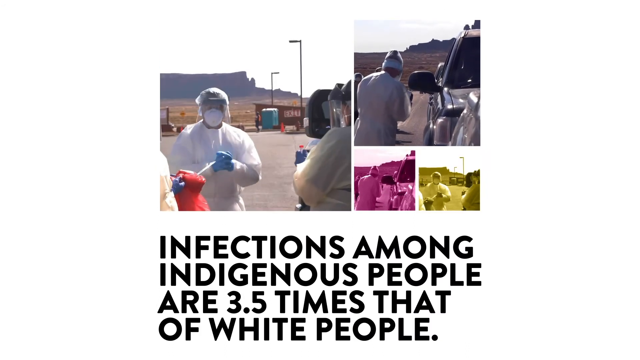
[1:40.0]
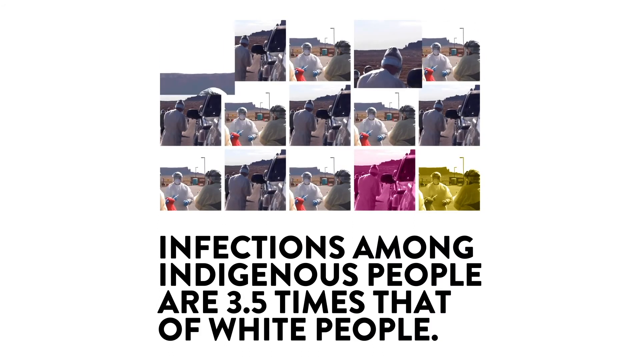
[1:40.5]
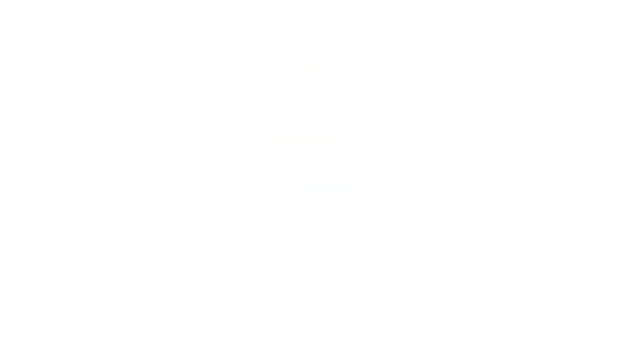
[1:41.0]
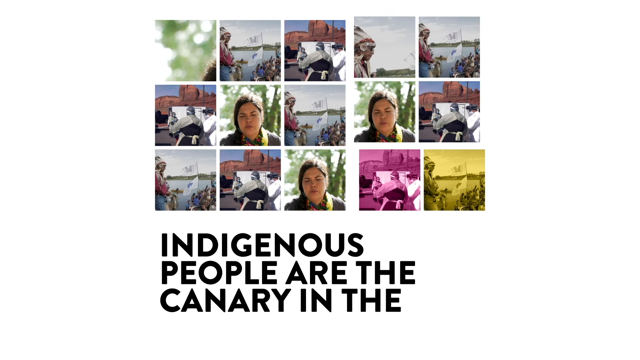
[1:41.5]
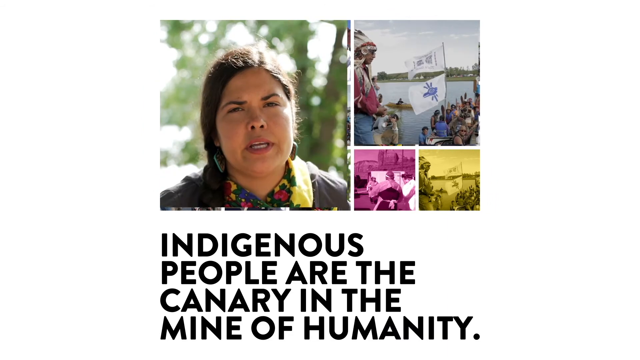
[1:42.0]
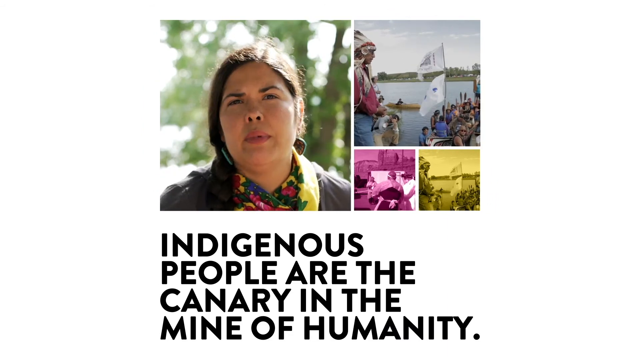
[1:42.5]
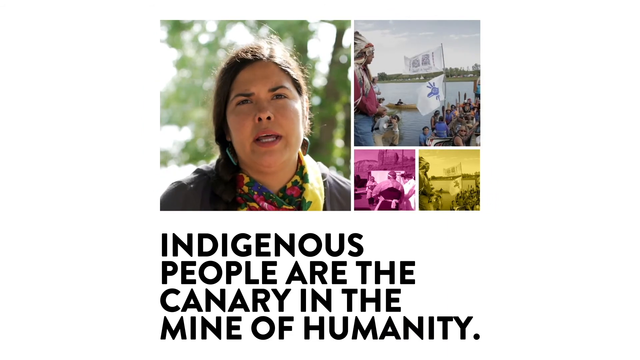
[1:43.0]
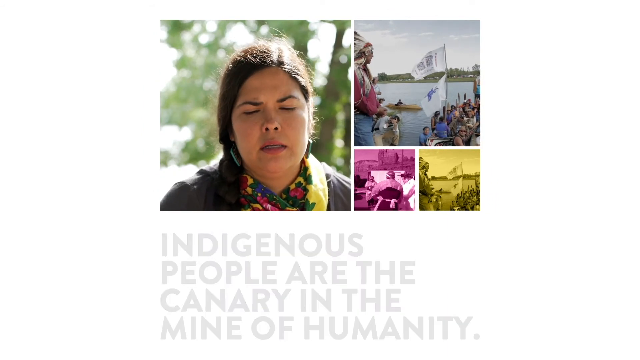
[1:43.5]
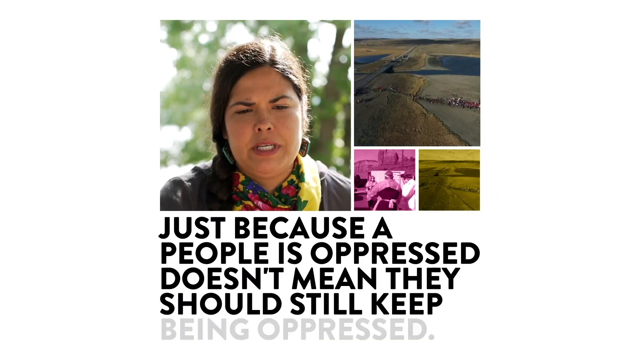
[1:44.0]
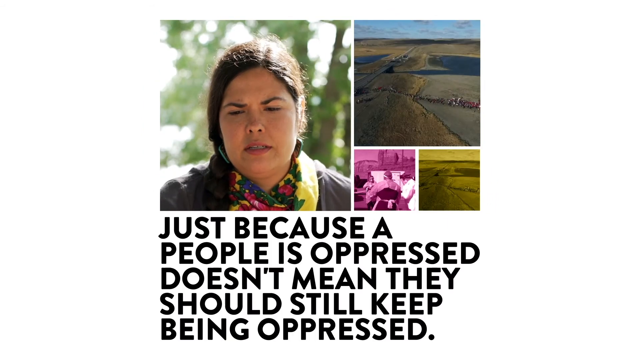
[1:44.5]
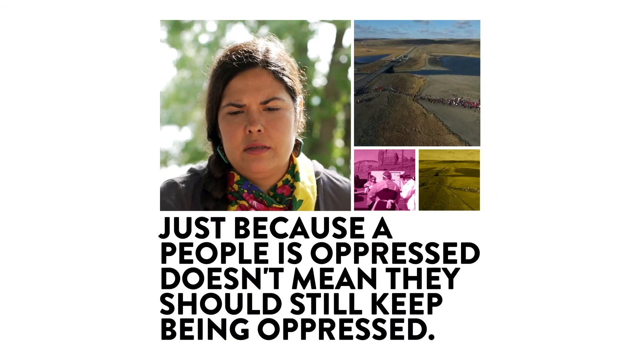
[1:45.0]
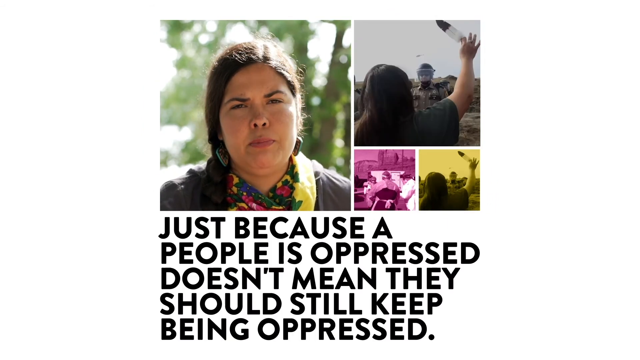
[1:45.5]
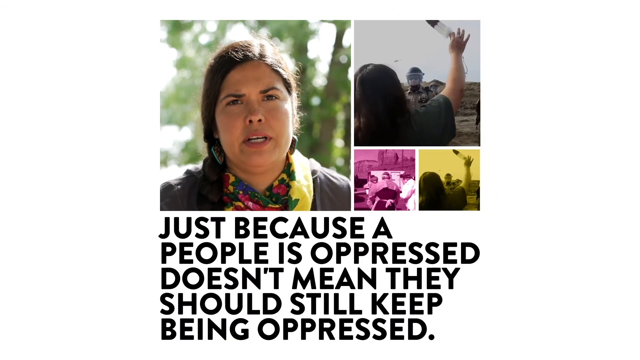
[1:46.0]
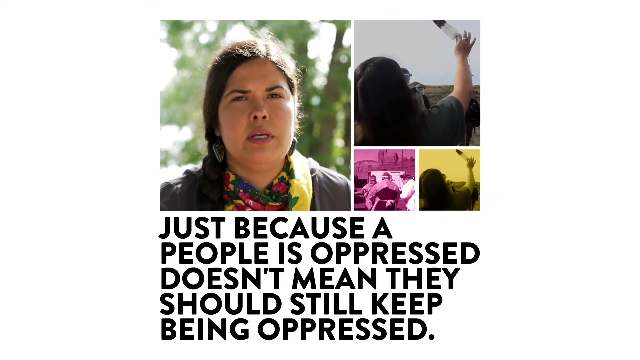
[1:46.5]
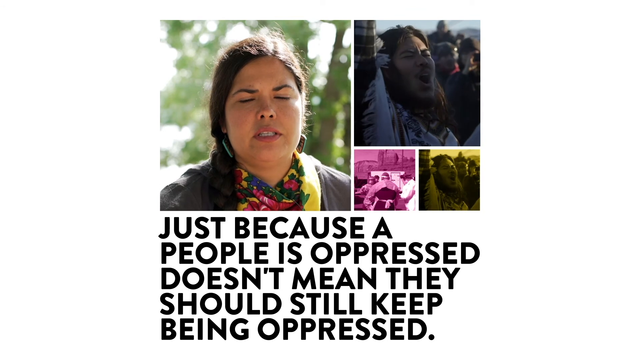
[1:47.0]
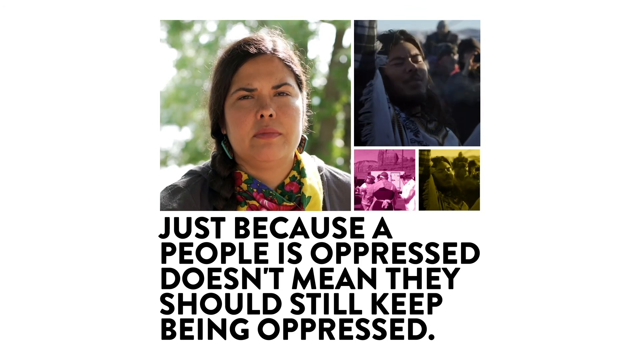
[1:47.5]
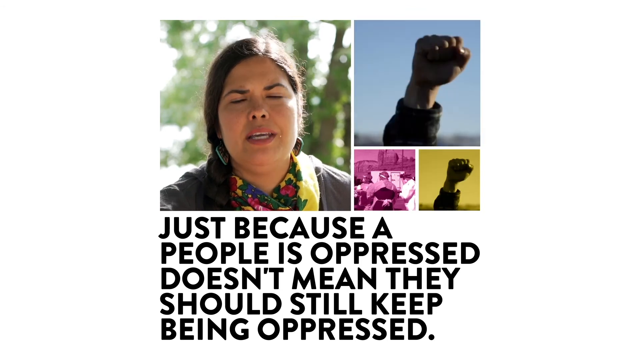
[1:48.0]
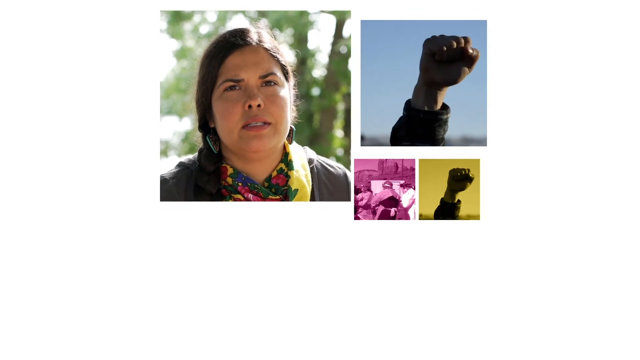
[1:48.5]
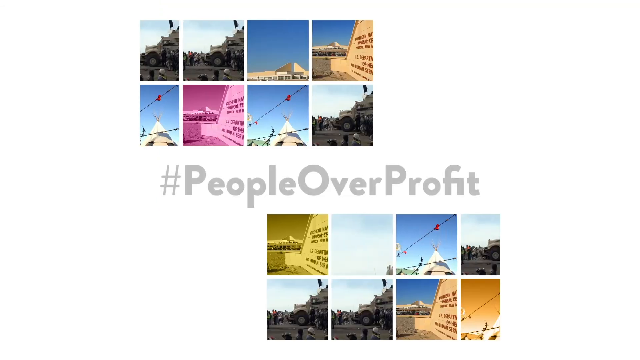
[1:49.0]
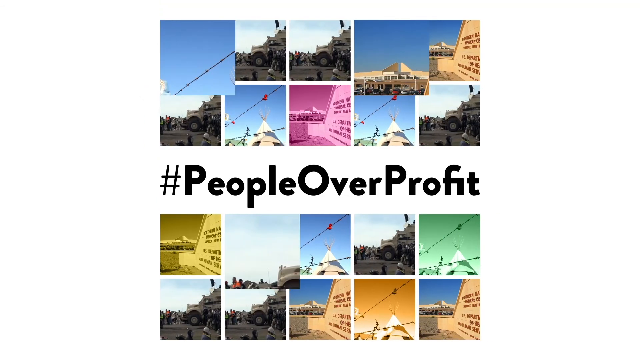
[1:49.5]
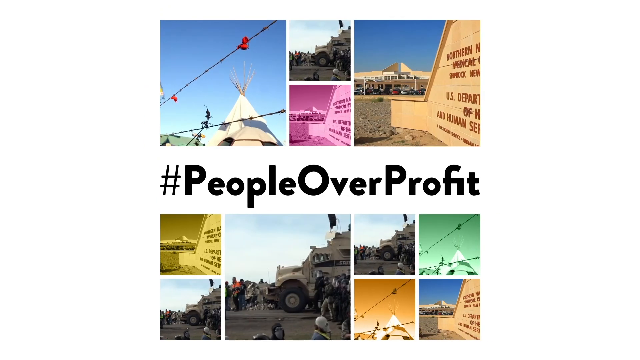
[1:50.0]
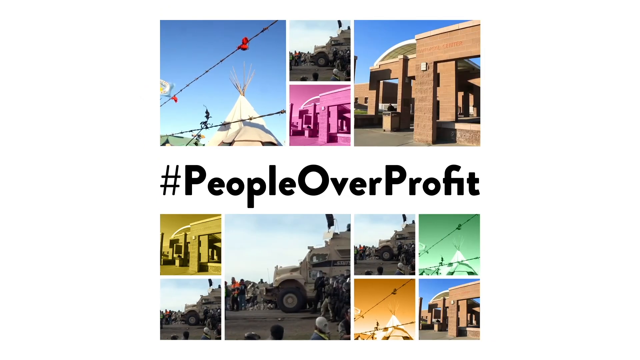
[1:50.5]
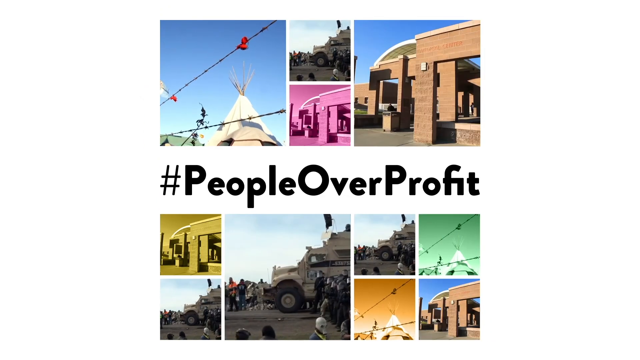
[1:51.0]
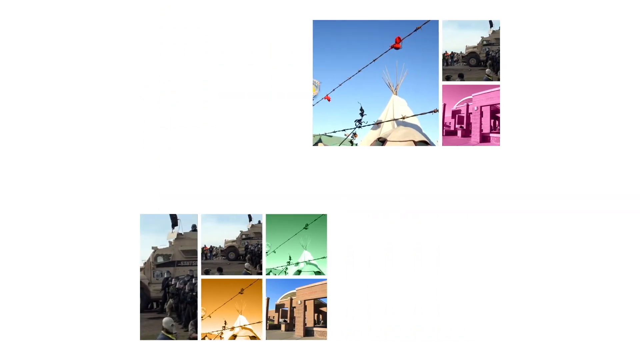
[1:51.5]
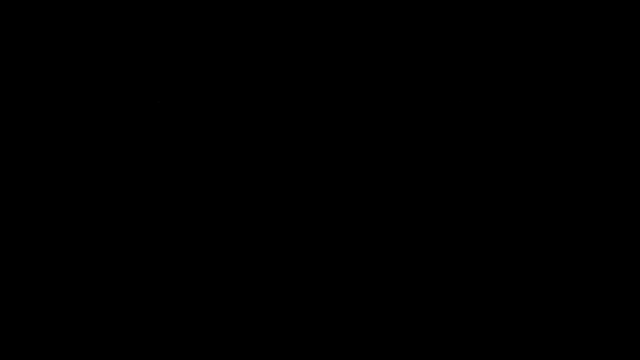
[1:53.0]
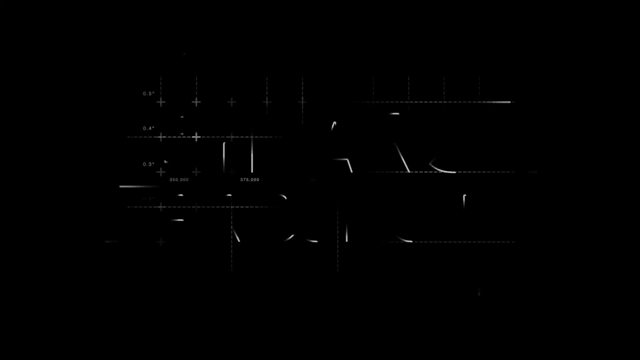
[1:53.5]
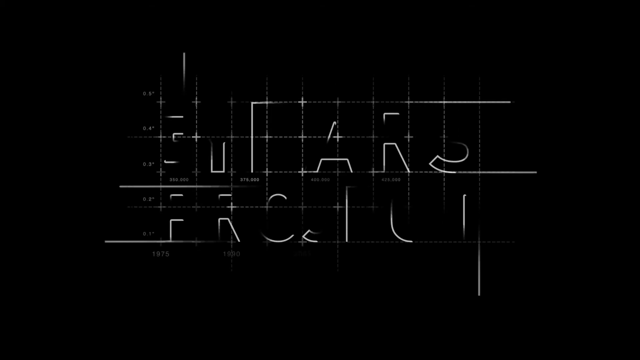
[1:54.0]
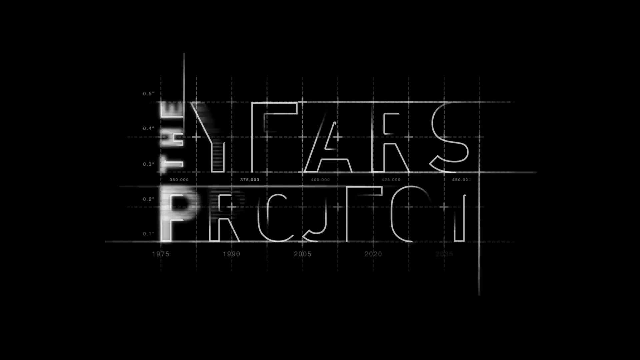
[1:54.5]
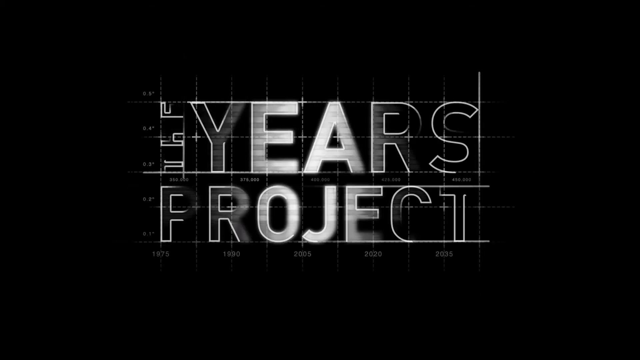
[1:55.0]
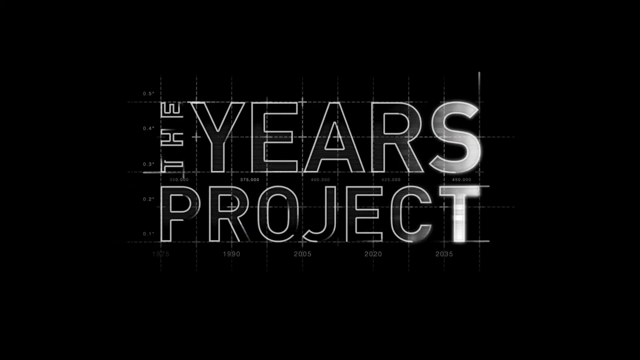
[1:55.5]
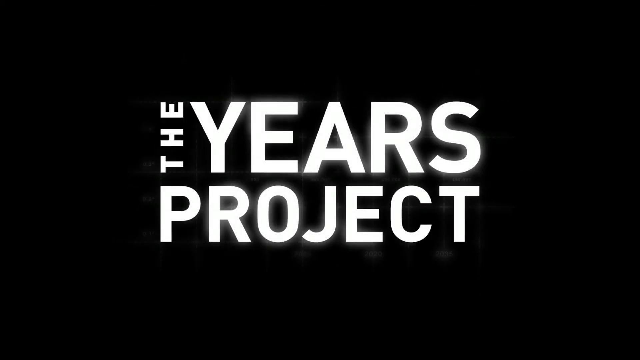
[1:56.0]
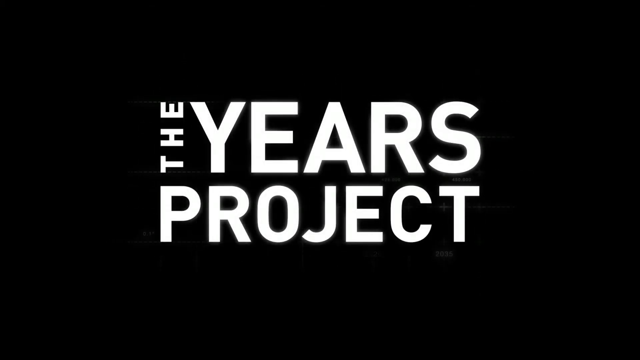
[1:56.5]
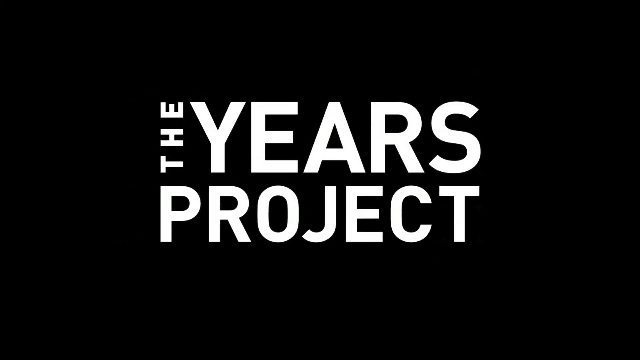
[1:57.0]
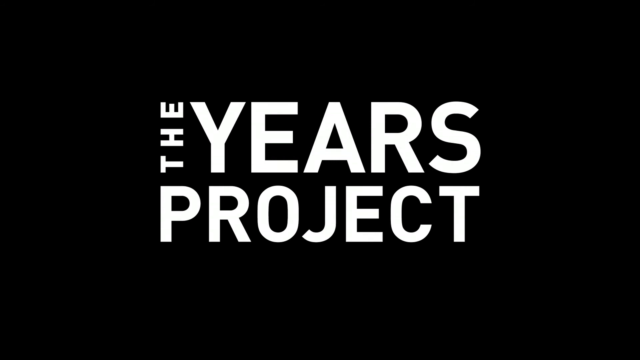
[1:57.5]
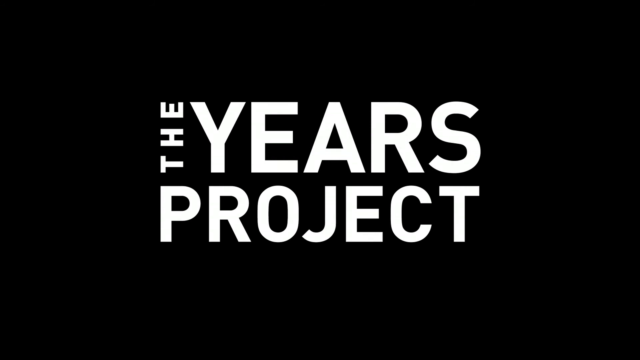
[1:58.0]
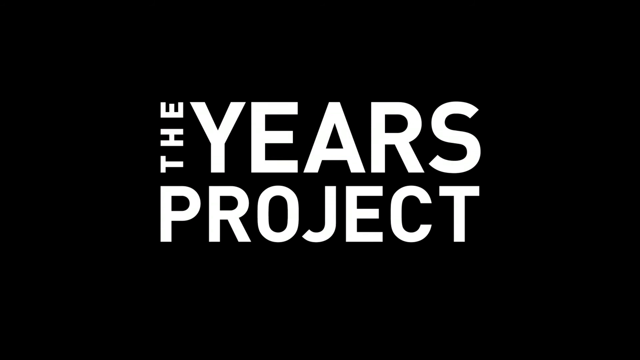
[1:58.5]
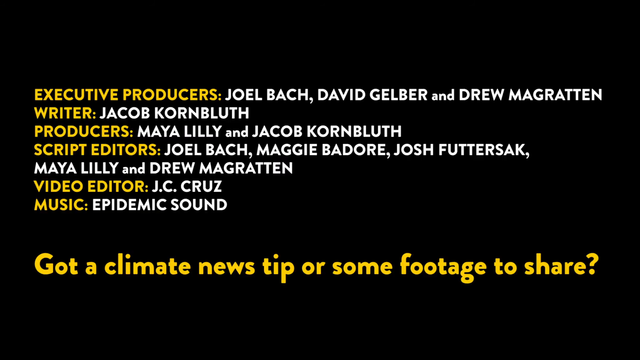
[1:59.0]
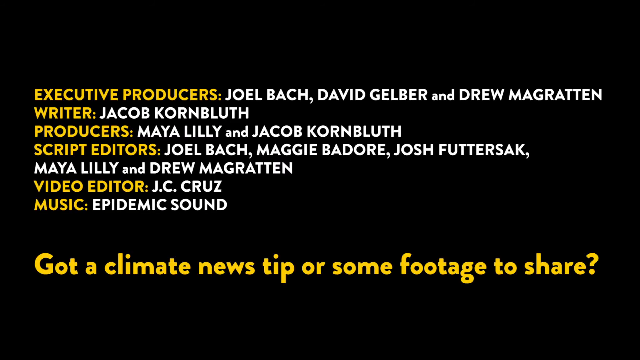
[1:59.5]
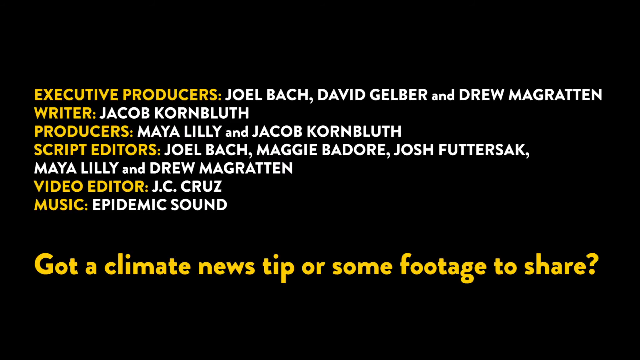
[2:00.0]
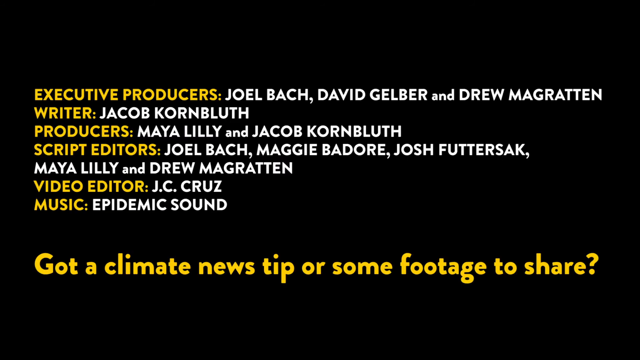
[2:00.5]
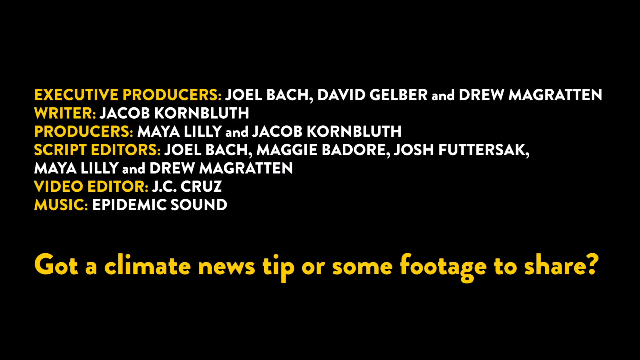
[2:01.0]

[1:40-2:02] The attorney appears again. Pictures show cars coming through and workers in full hazmat suits, apparently doing tests. Protests are shown. The video ends with a listing of the producers.